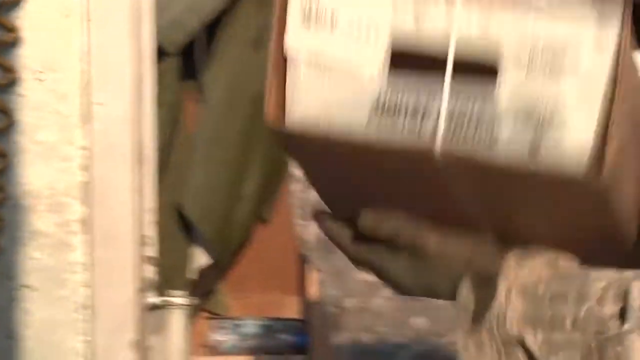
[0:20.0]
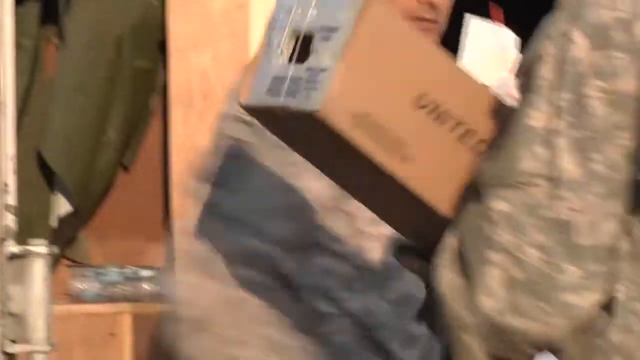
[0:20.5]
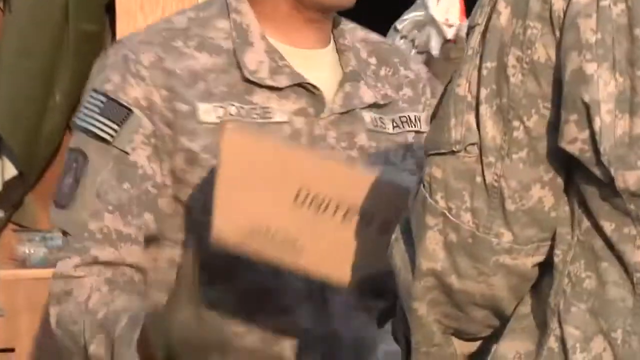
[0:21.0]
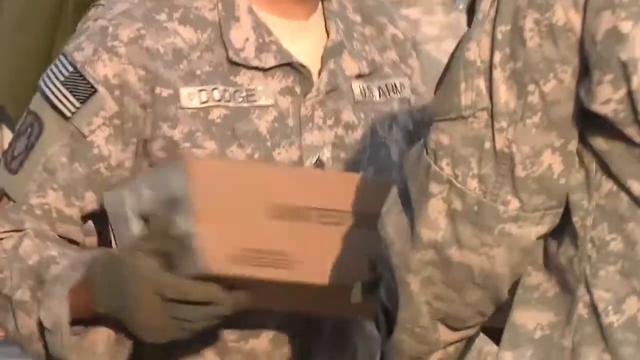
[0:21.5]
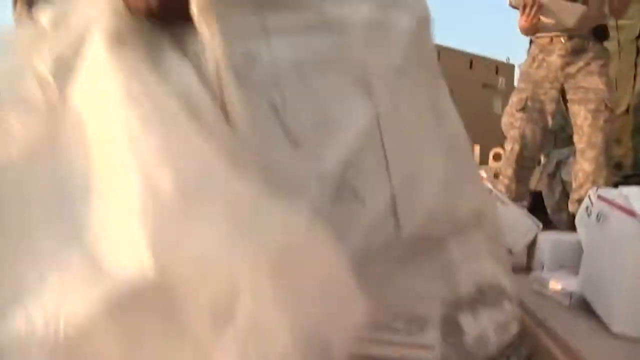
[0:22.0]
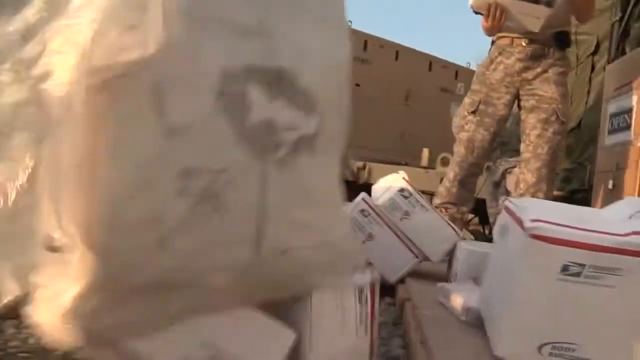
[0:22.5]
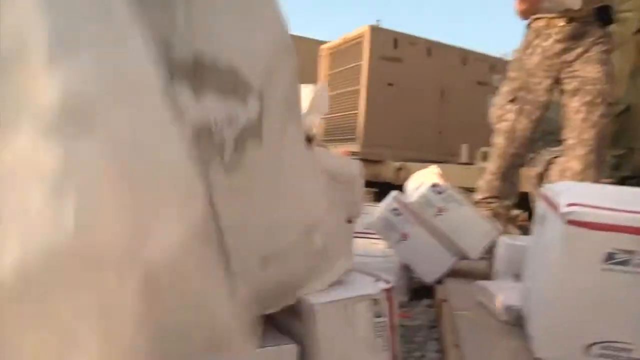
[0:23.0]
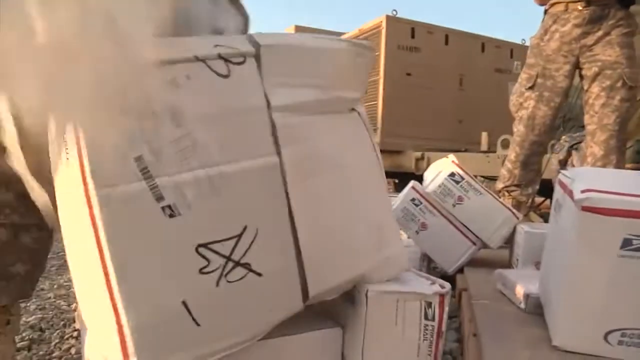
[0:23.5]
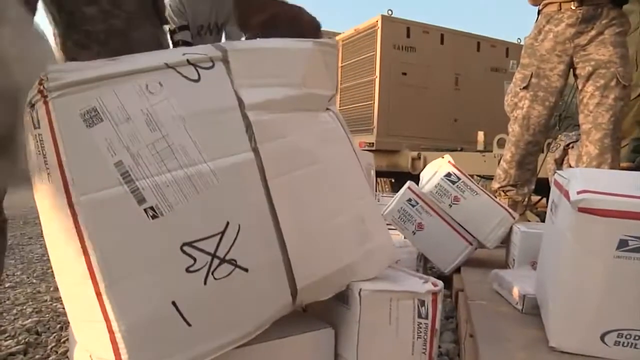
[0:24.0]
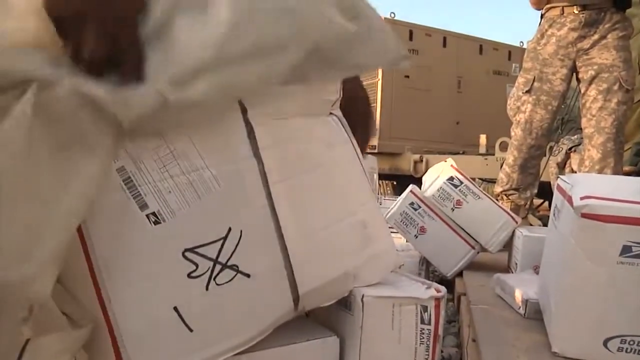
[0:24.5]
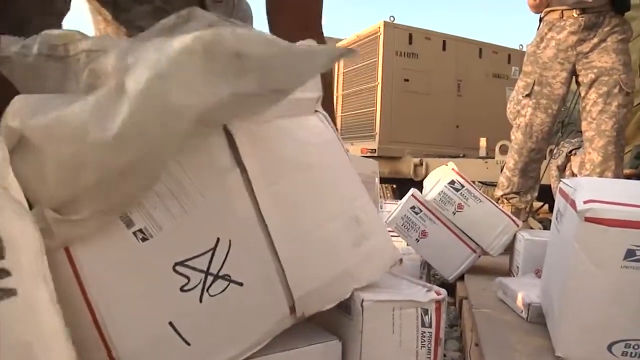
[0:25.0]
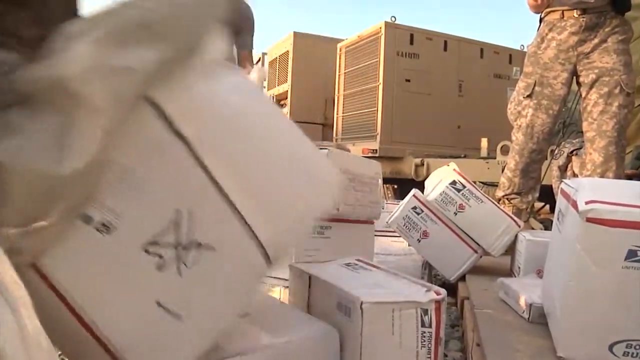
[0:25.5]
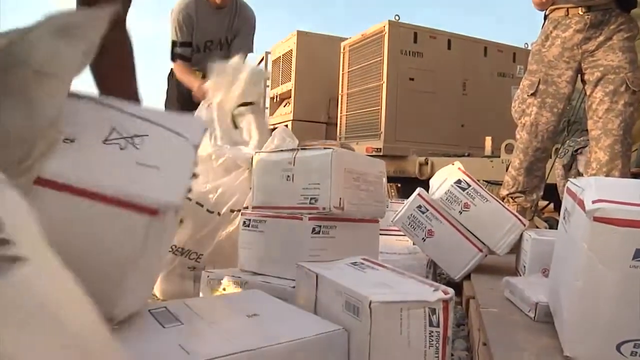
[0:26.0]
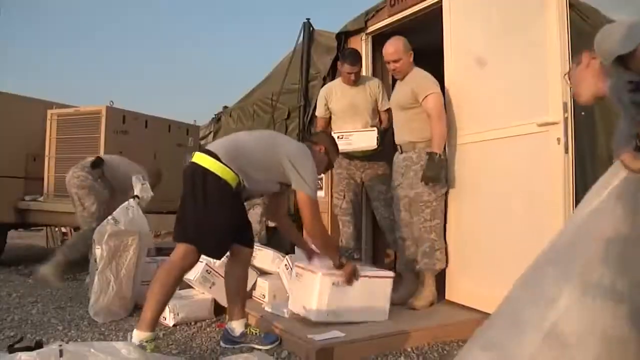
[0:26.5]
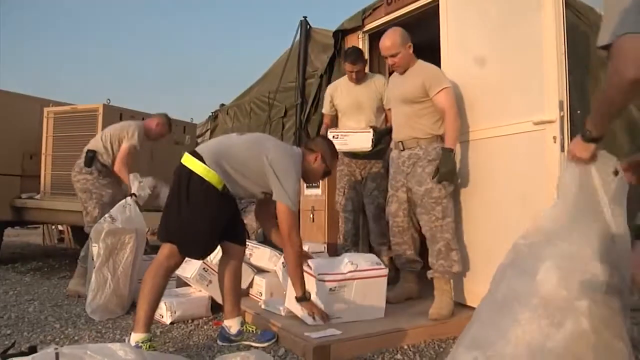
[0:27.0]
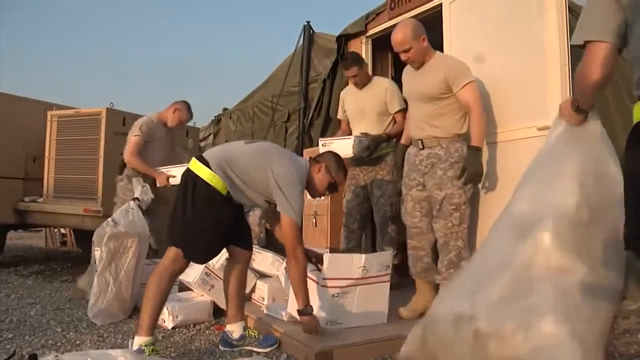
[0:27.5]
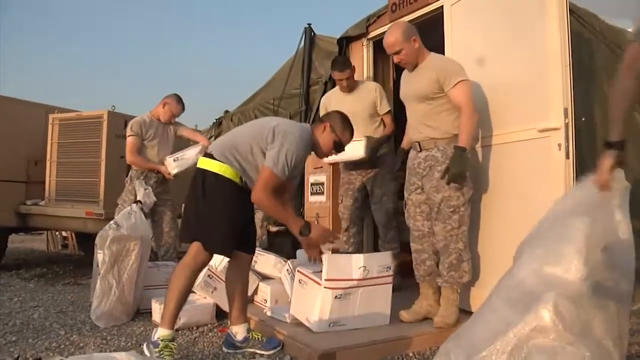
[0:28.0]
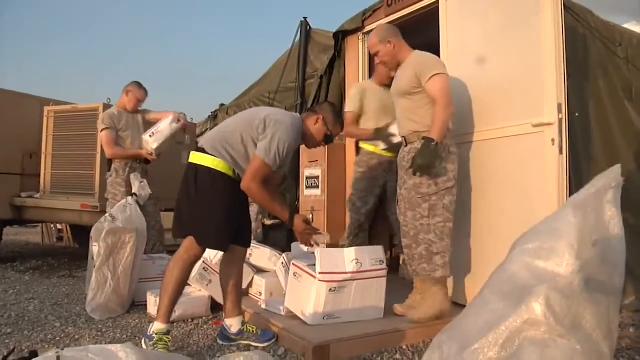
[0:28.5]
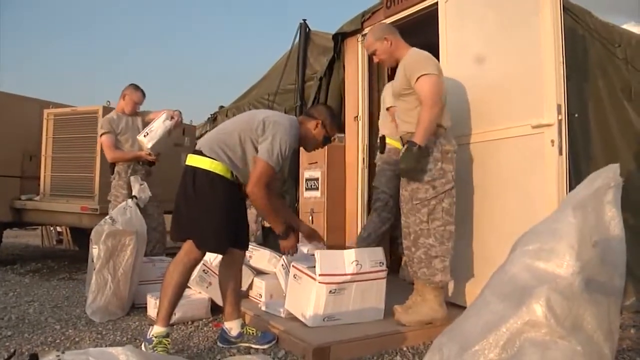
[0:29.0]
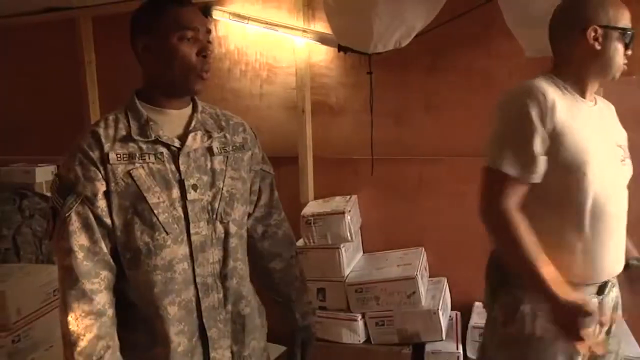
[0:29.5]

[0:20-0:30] A group of uniformed soldiers offloads boxes from the back of a truck. After unloading the boxes, they place them on the floor and open them. The boxes are white with writing on the side. The soldiers wear green fatigues, tan t-shirts and tan boots; some wear gloves, some wear army jackets, and some hold big plastic bags. There is also a man in black shorts, a grey t-shirt and sunglasses. All the soldiers are male.